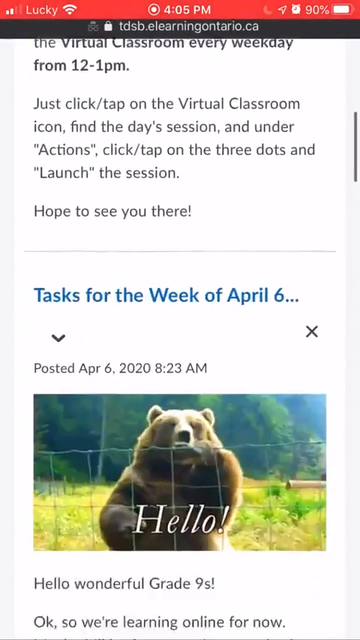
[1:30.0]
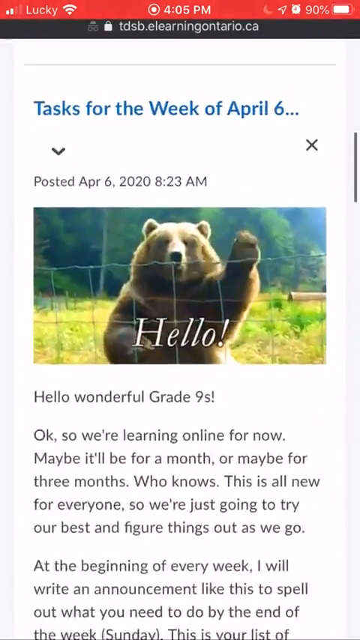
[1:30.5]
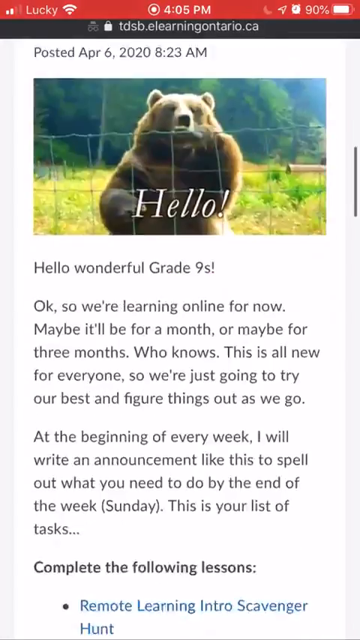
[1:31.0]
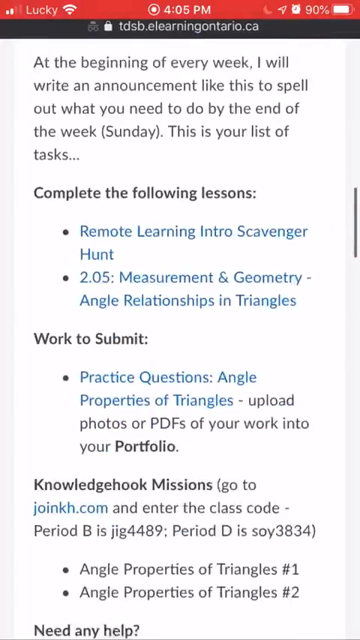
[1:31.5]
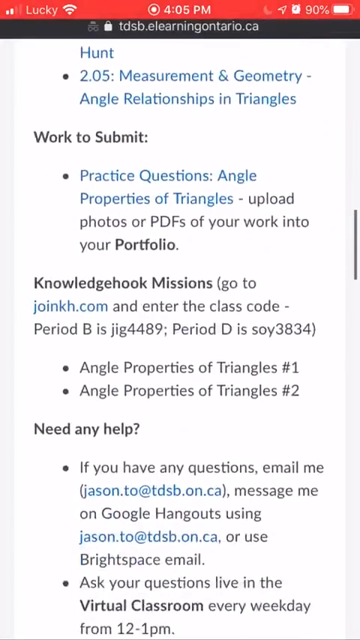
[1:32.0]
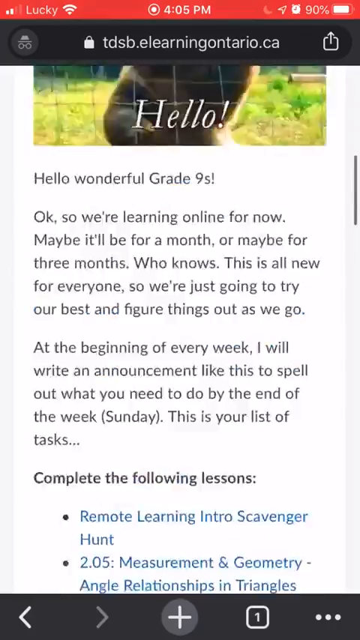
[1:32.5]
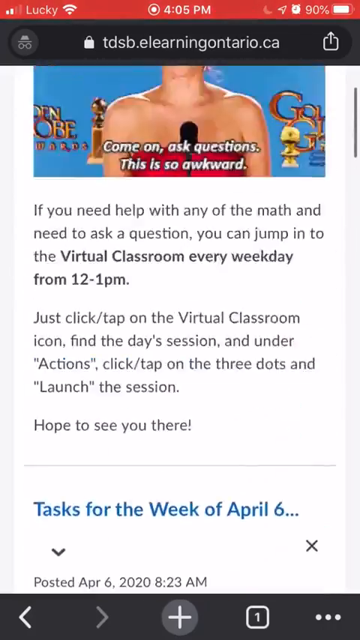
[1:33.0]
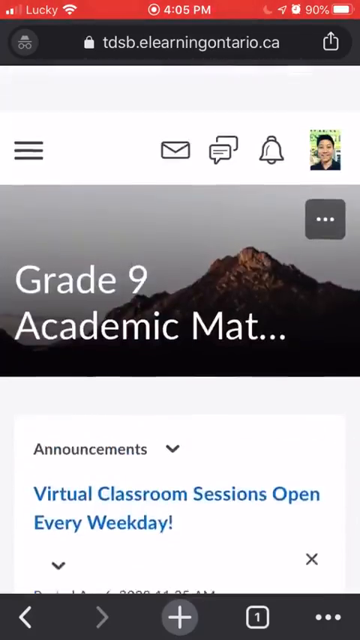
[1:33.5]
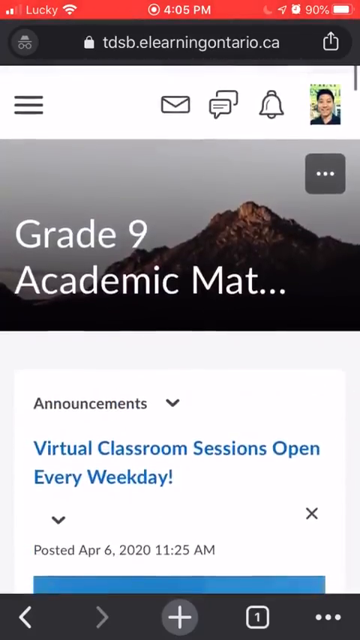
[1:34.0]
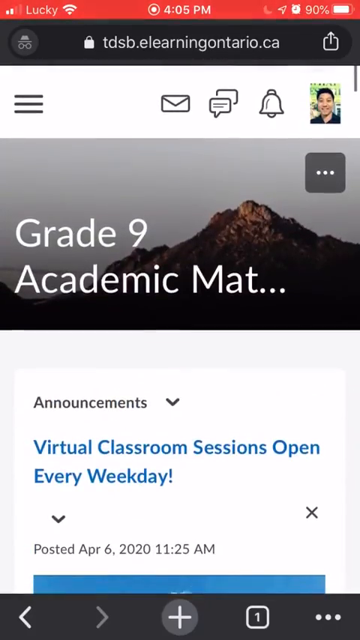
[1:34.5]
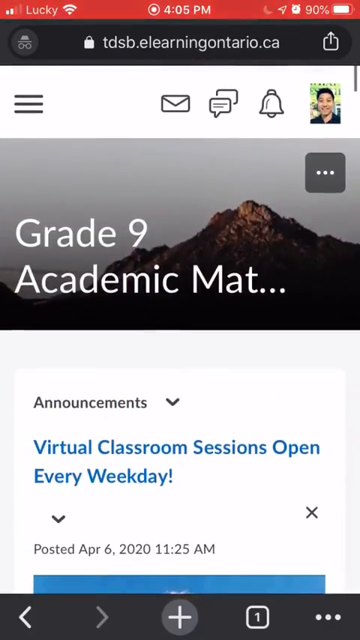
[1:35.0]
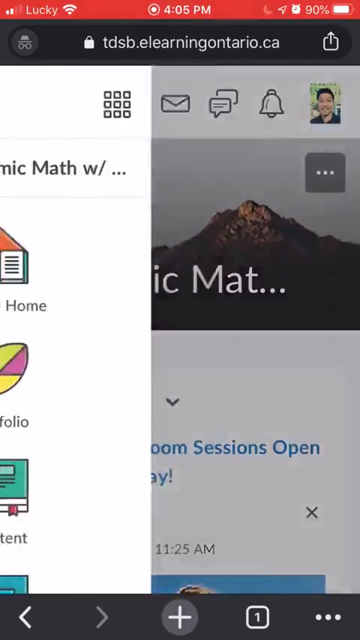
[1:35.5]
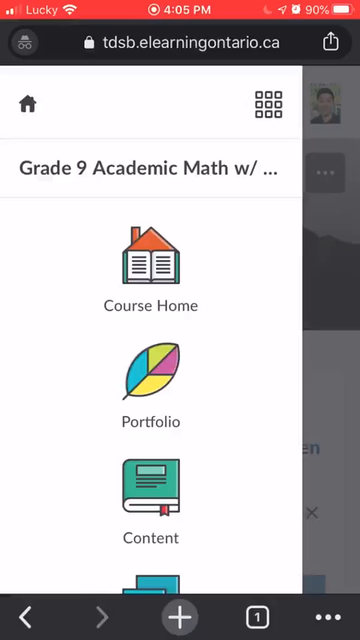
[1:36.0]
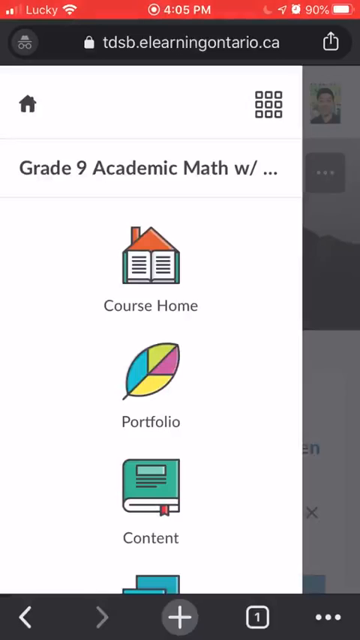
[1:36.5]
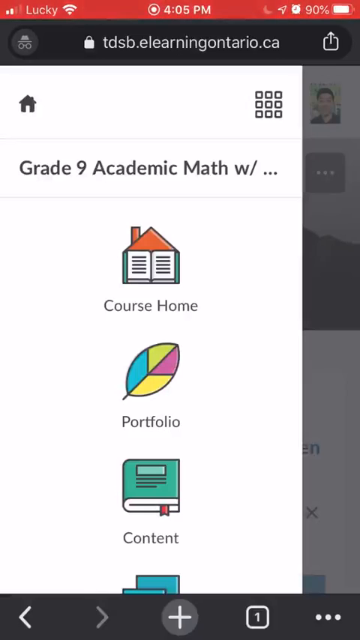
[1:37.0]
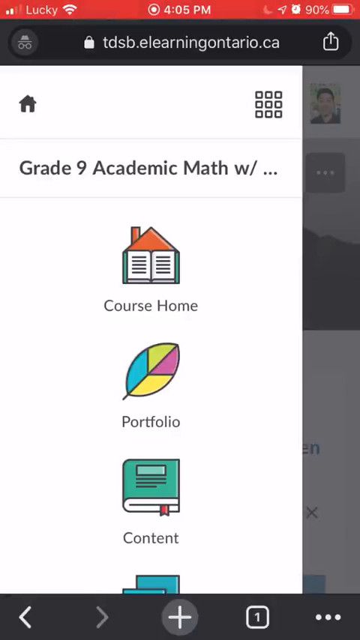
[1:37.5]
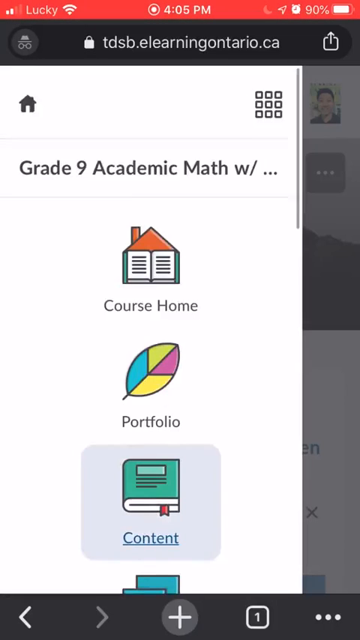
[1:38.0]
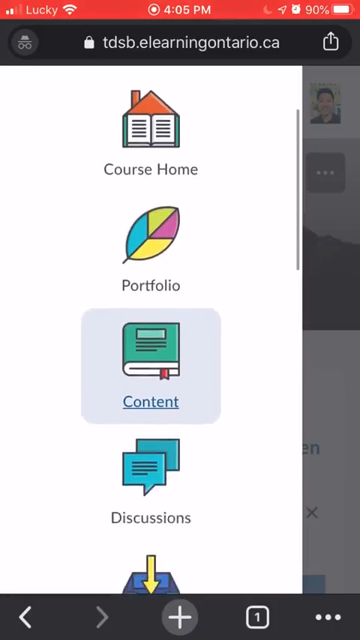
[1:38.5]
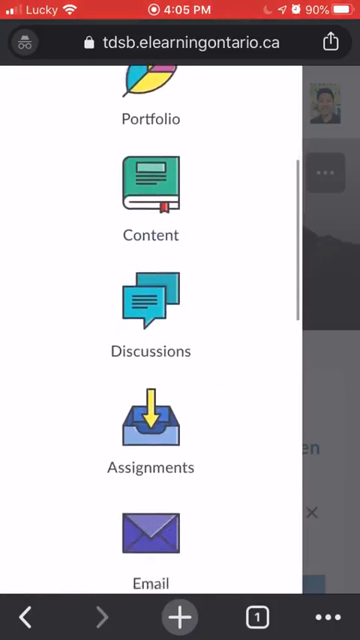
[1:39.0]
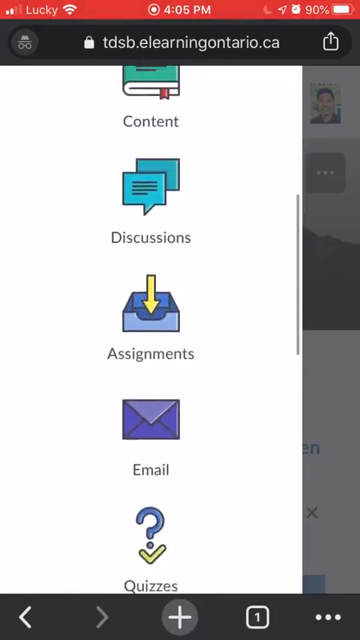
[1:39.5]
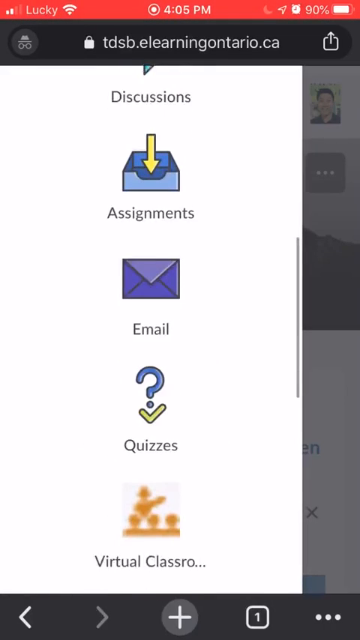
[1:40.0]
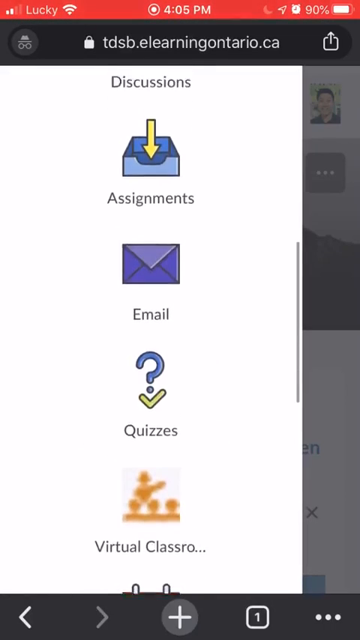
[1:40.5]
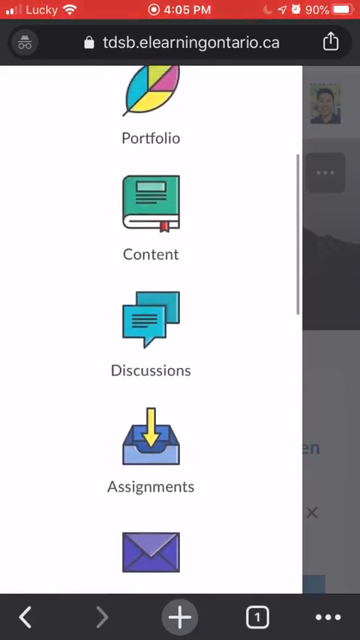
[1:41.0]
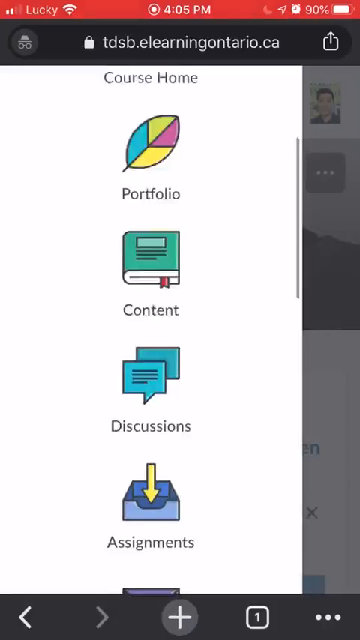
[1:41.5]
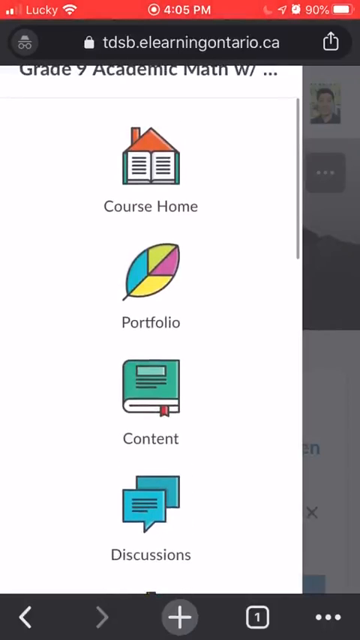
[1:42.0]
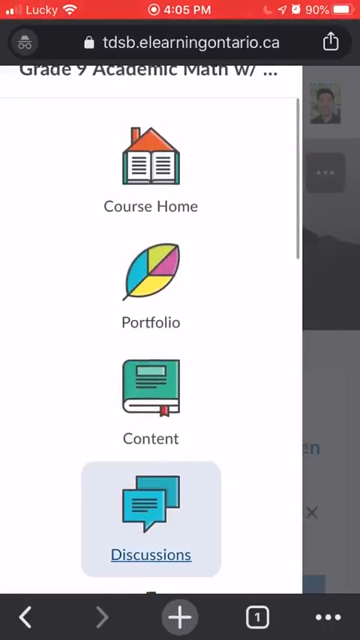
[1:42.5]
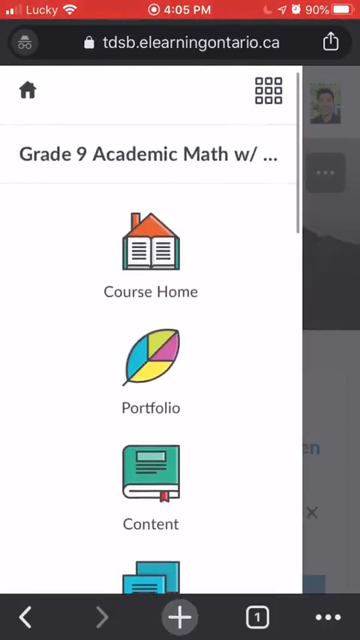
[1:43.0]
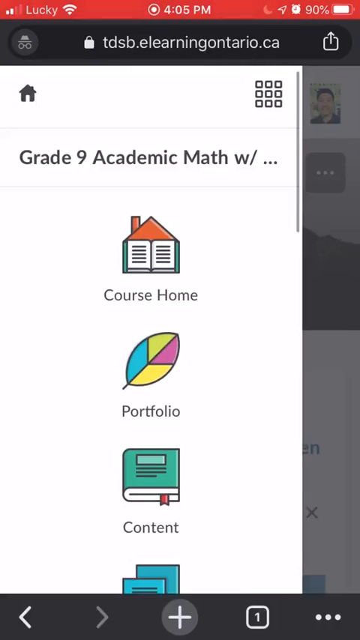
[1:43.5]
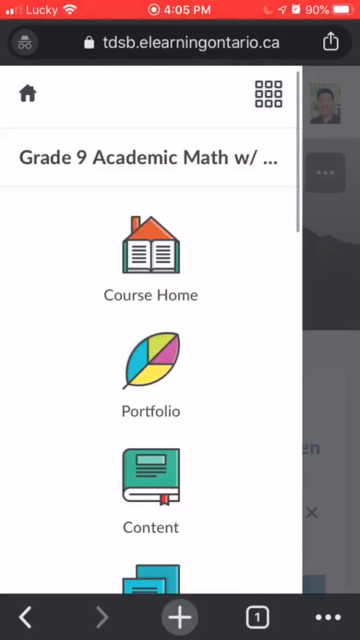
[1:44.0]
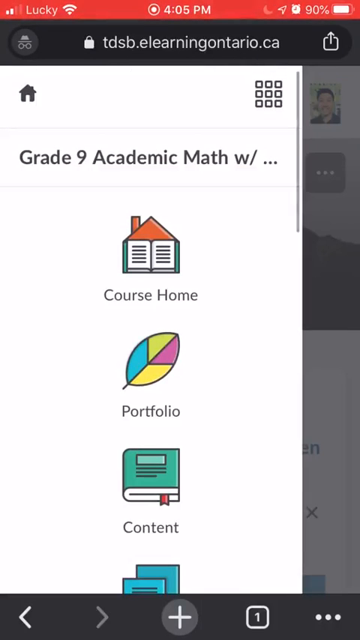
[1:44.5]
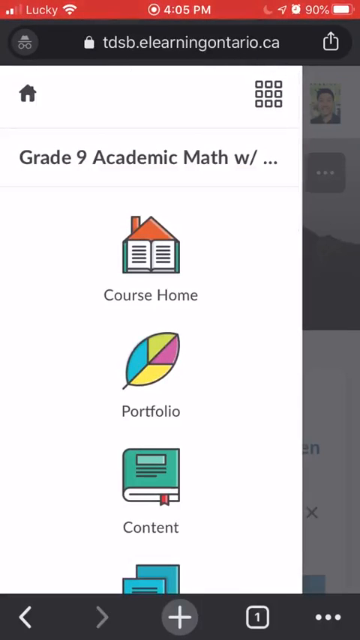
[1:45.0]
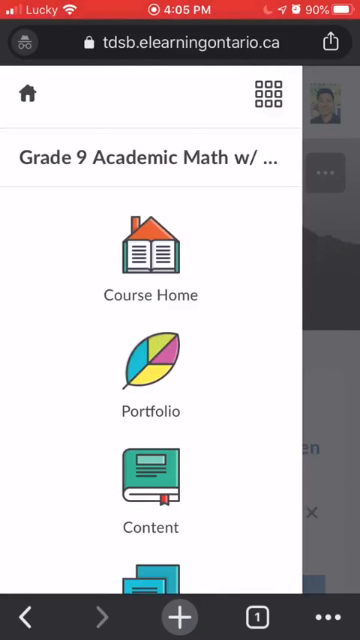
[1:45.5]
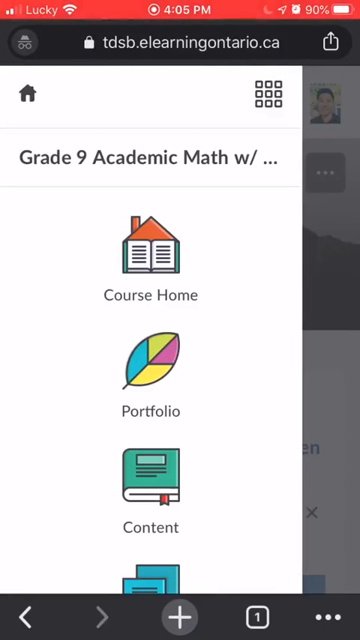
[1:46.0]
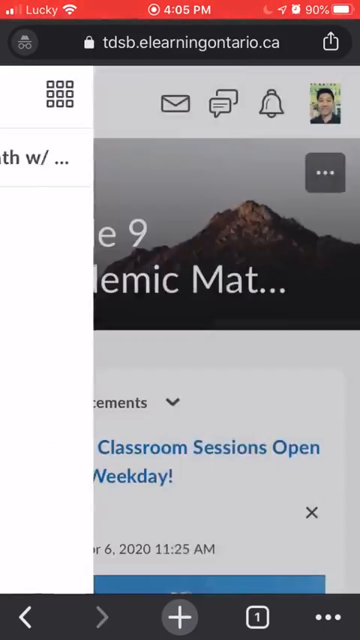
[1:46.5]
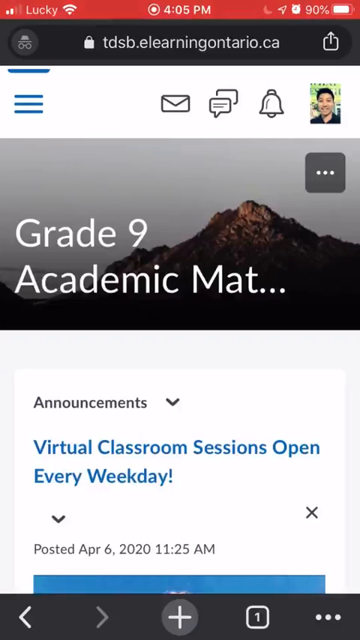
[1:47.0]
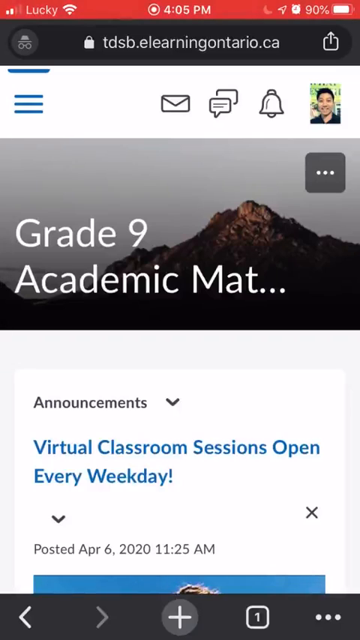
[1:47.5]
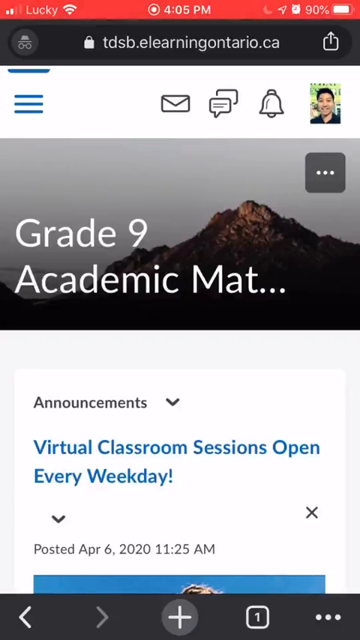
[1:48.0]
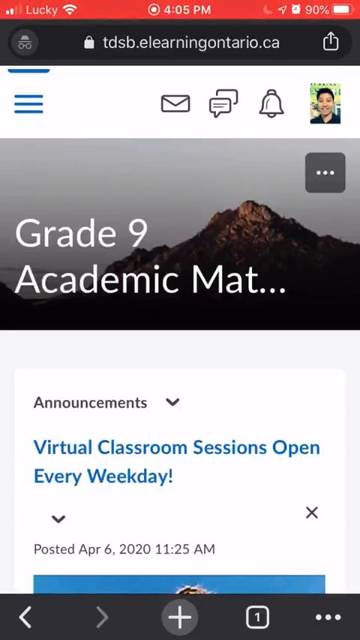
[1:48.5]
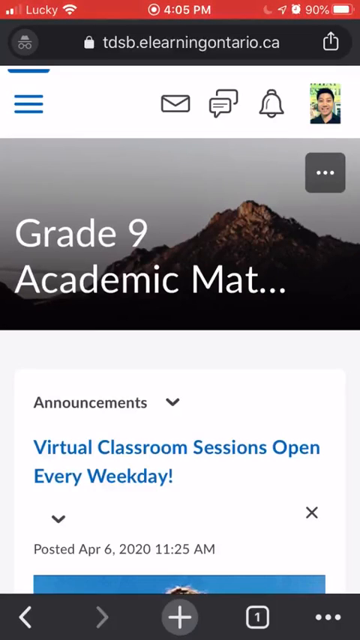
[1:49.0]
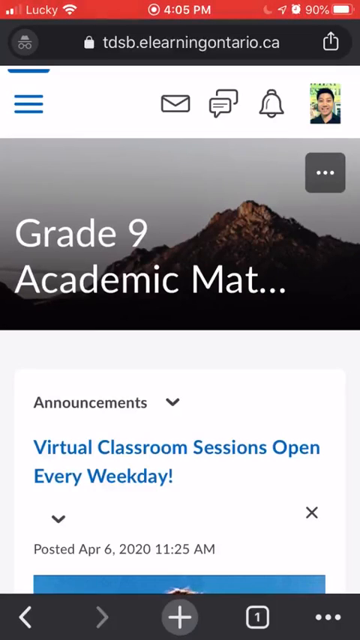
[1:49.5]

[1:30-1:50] The user keeps scrolling down through lots of text within the Grade 9 Academic Math course. A sliding menu appears on the left side with various colourful icons, kind of in the same colour scheme as Google. An option bar runs along the top, and the user's picture is in a circle on the right side. The menu lists categories including Course Home, Portfolio, Content, Discussions, Assignments, Email and Quizzes, before the user quickly removes the menu from view.